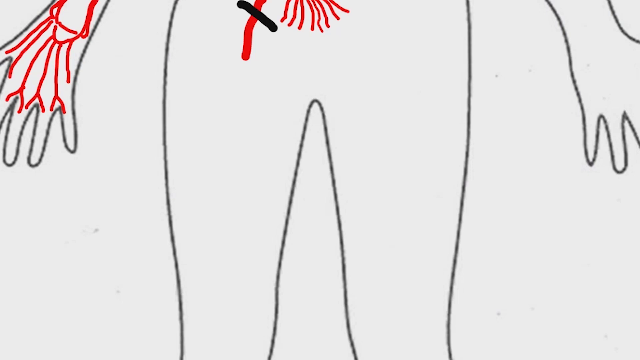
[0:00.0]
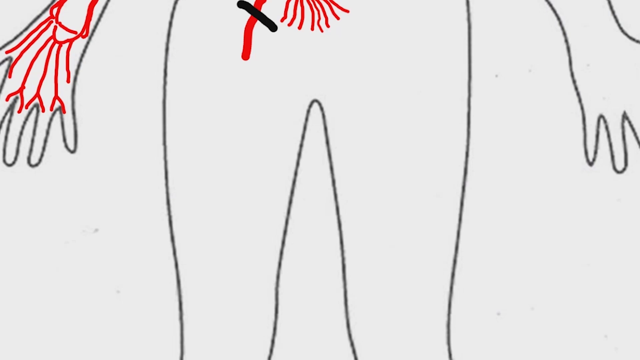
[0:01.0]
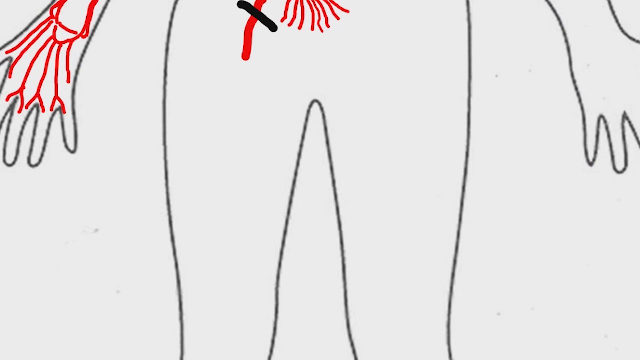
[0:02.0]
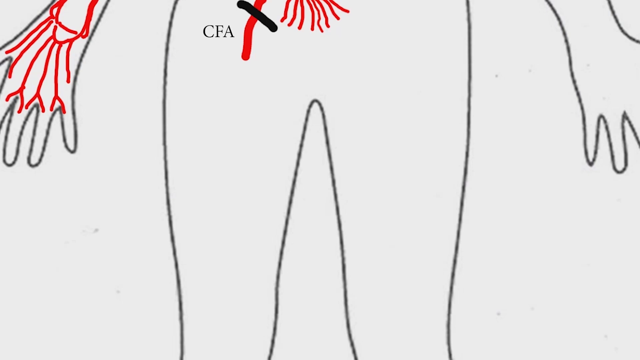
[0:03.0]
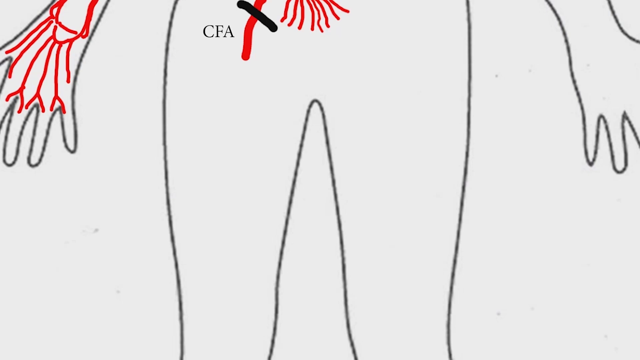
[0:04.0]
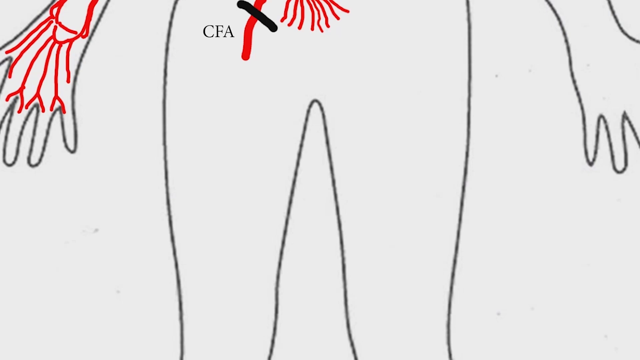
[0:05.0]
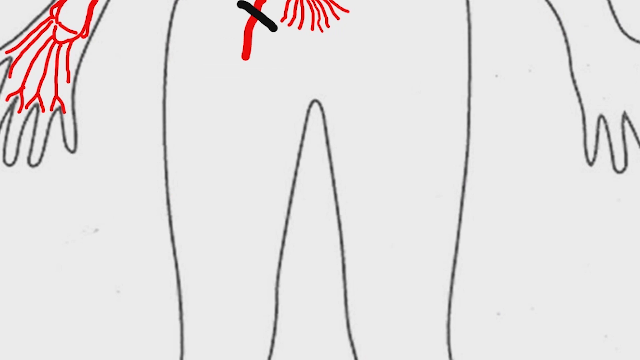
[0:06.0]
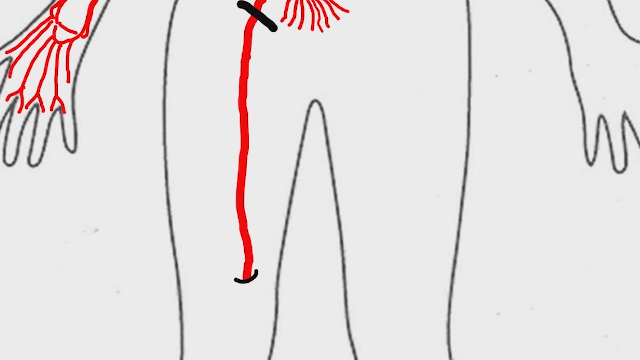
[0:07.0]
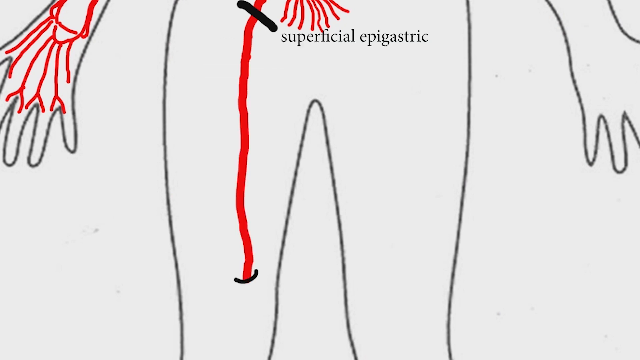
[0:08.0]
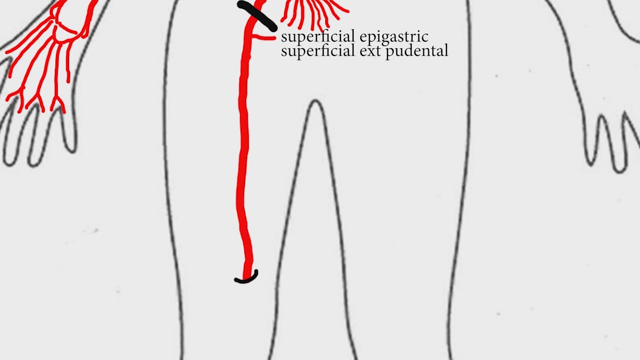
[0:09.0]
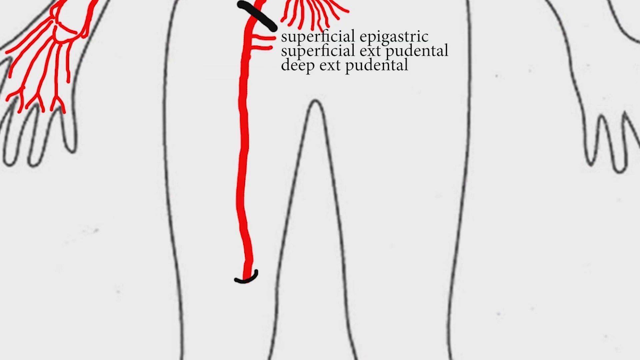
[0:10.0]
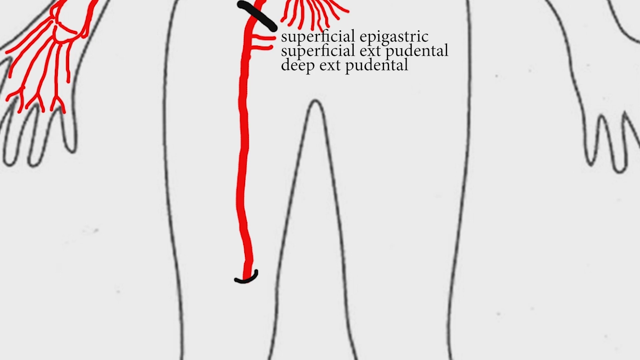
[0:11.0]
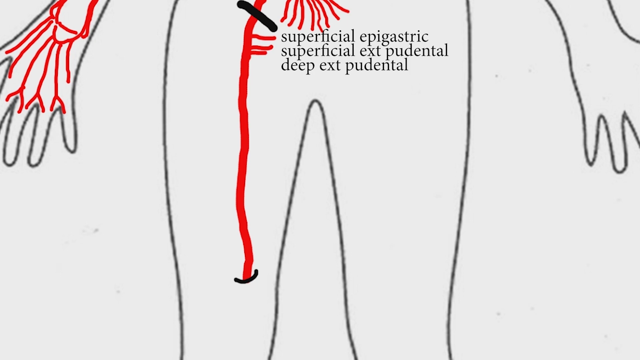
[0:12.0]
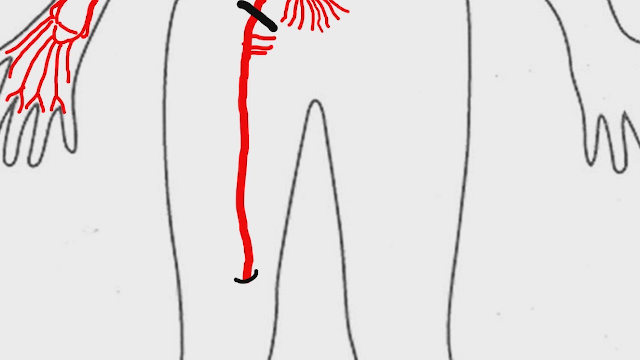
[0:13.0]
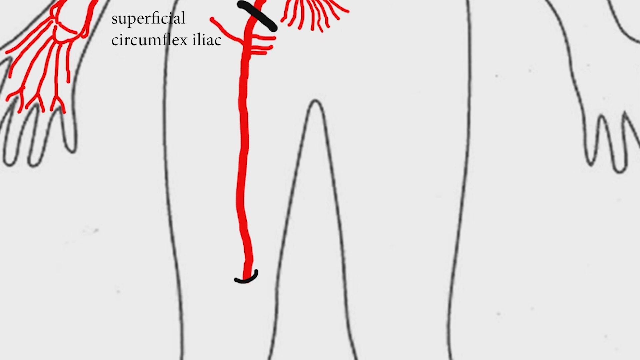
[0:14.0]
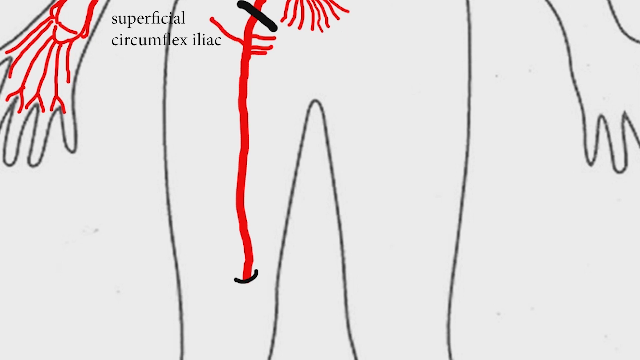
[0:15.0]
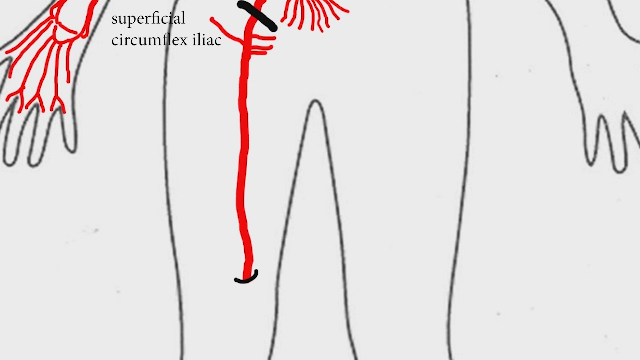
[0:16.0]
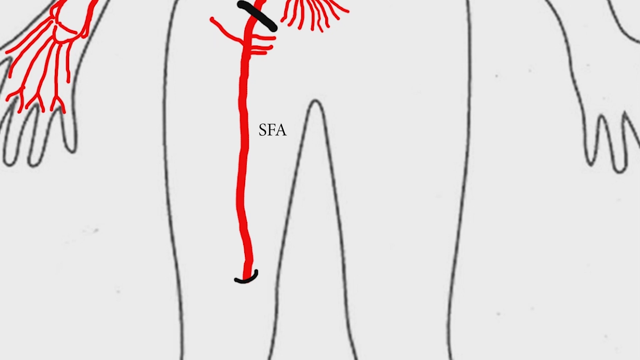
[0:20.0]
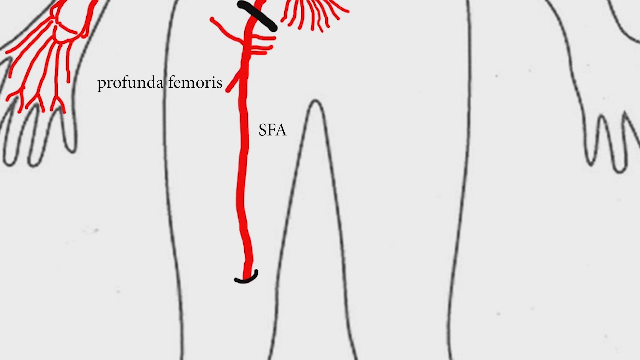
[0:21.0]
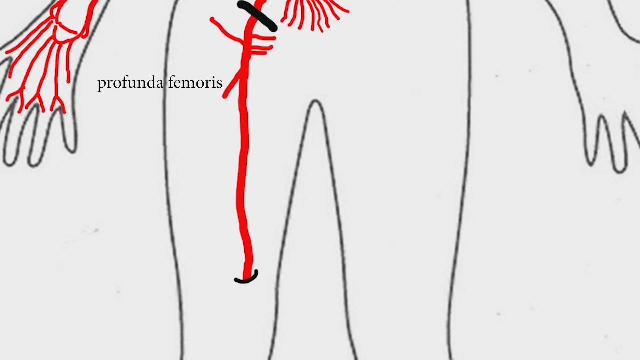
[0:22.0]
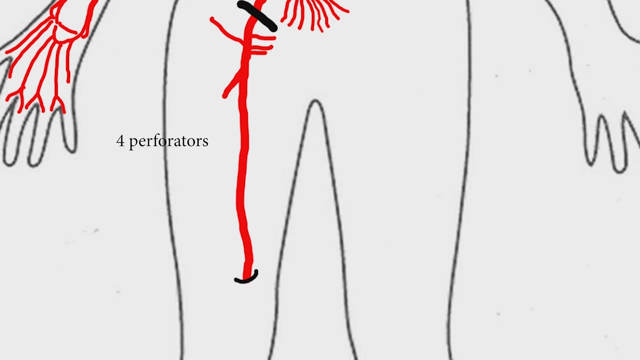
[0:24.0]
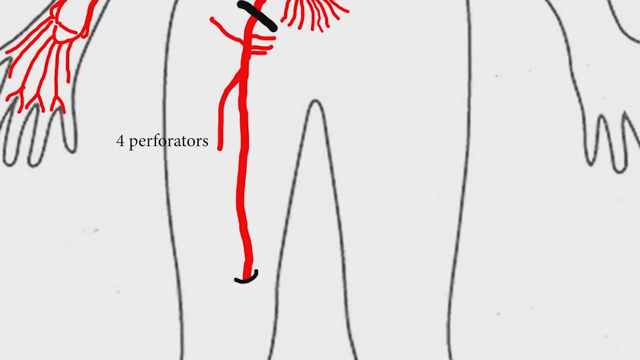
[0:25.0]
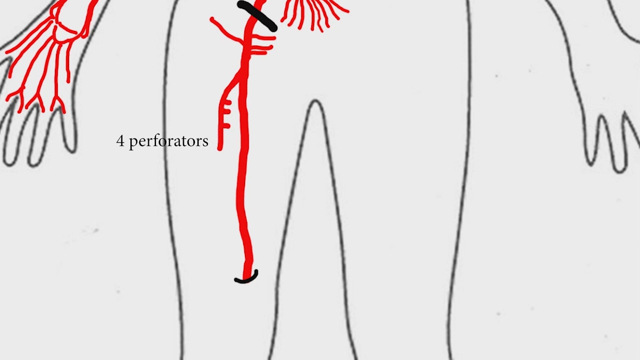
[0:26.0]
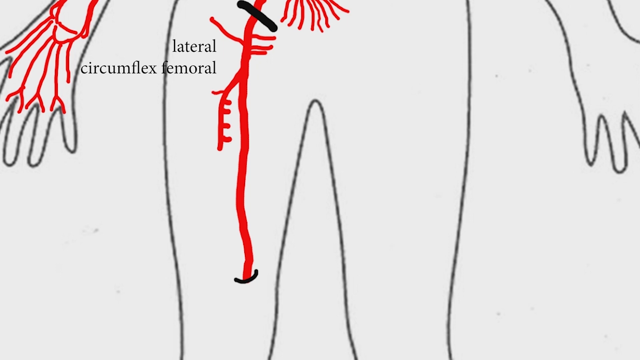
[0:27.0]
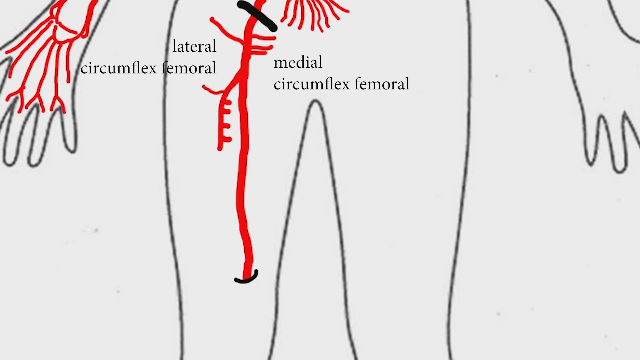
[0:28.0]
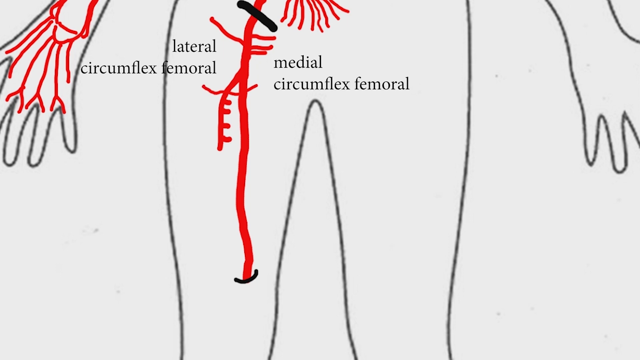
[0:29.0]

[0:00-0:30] A very simple sketch drawing of the outline of a human body is on a white background. The camera is zoomed in on the midsection and legs, so only the lower half of the person down to the kneecaps is visible, along with the left and right arms. At the beginning, red veins and blood vessels are drawn on the person's right hand; it appears to be just a sketch drawing. Red veins and arteries also come down through the midsection. After a couple of seconds, the letters "CFA" emerge on the screen. A longer red line is then drawn down the leg to signify an artery or vein, and the words "superficial epigastric" are written on the screen next to it, with a line pointing to the vein. Other words in medical jargon are written on the screen. Another line extends out from the long vein, and the words "superficial circumflex iliac" are written. As the video progresses, it moves down the person's leg, and different lines extend out from the main vein or artery in the leg as descriptions are given.